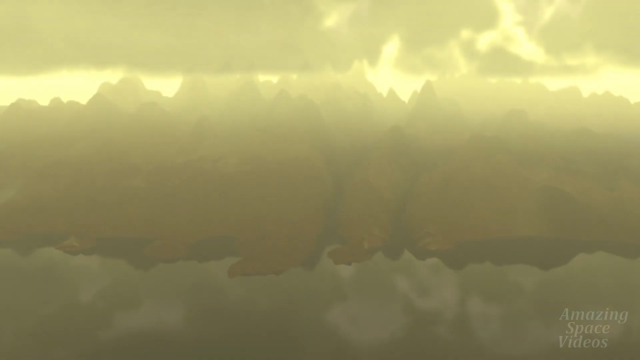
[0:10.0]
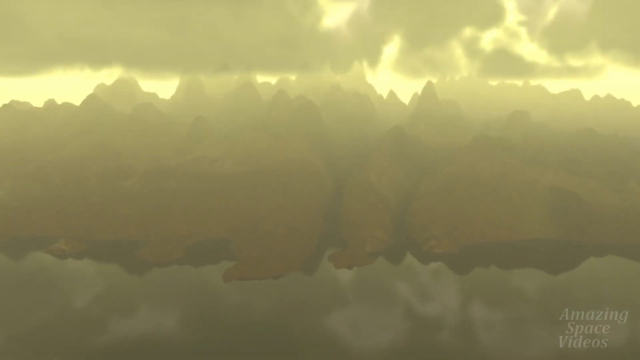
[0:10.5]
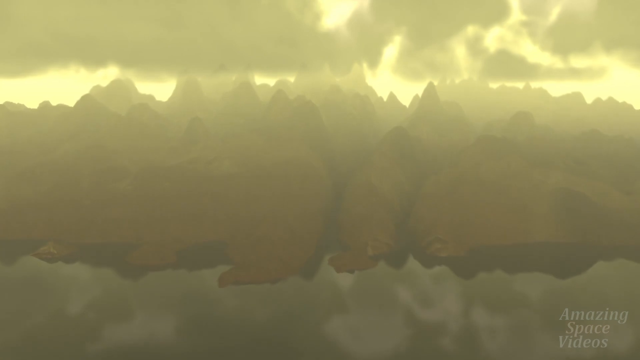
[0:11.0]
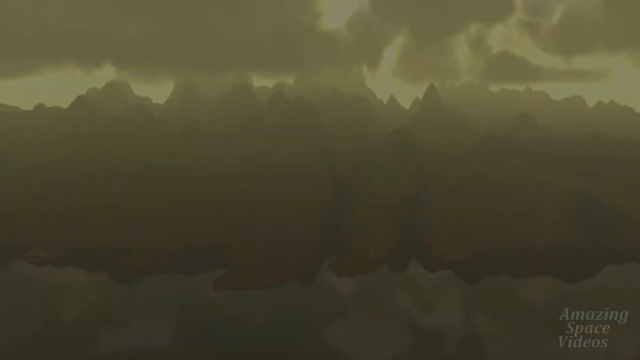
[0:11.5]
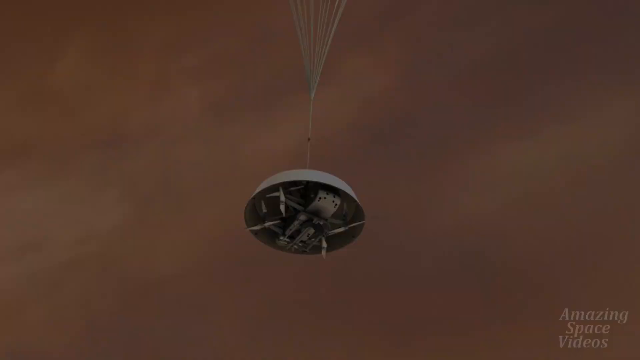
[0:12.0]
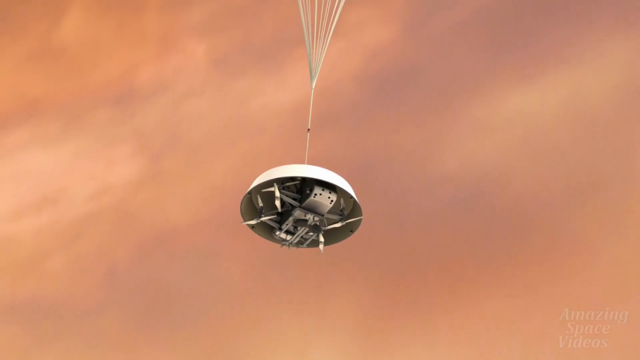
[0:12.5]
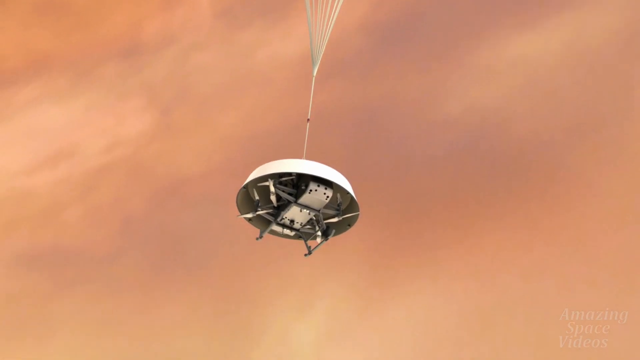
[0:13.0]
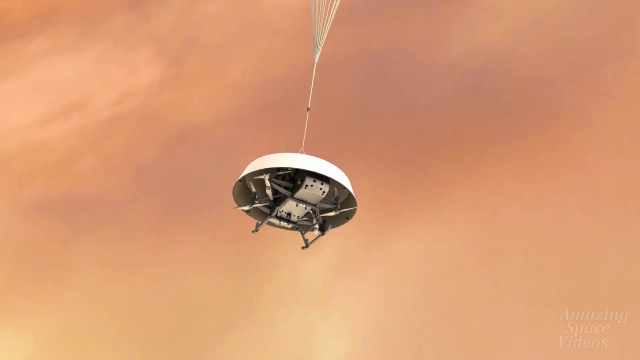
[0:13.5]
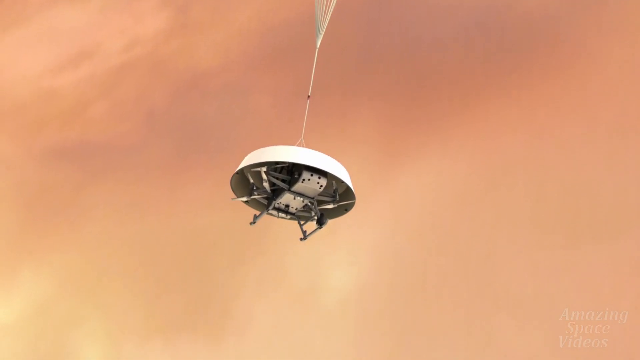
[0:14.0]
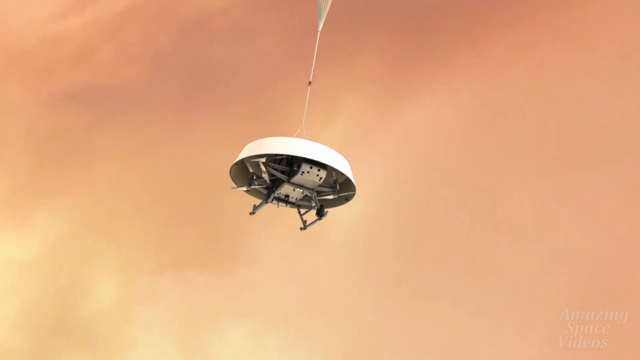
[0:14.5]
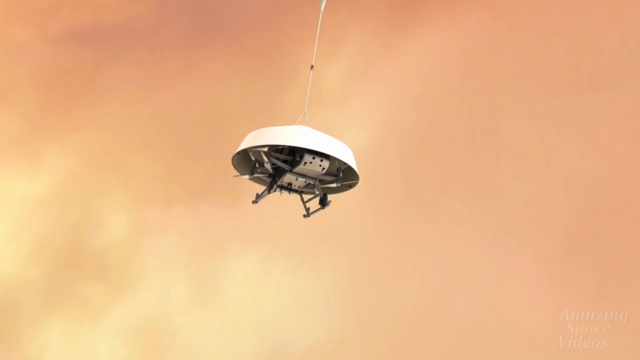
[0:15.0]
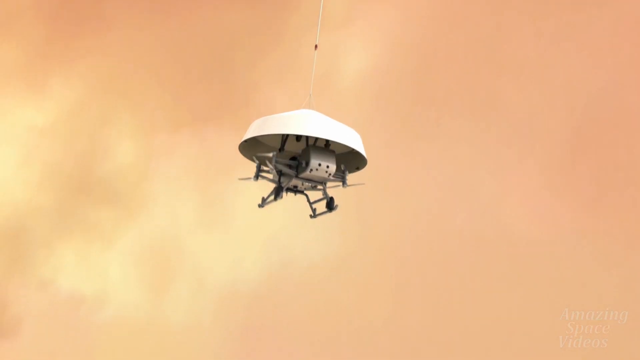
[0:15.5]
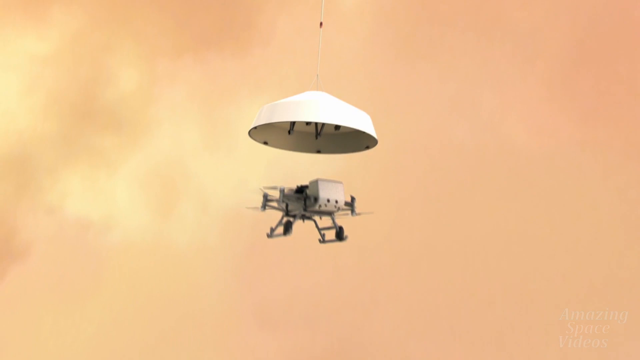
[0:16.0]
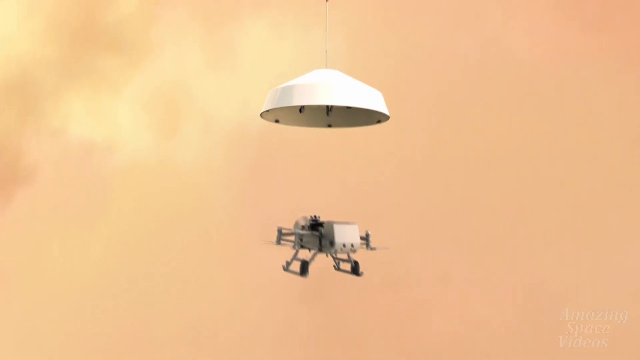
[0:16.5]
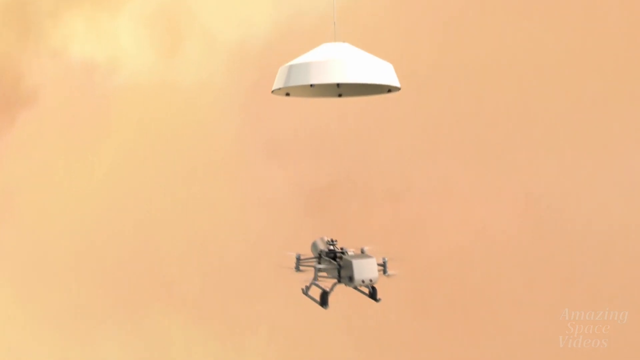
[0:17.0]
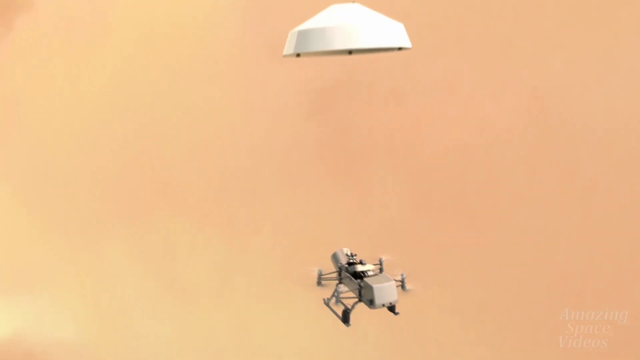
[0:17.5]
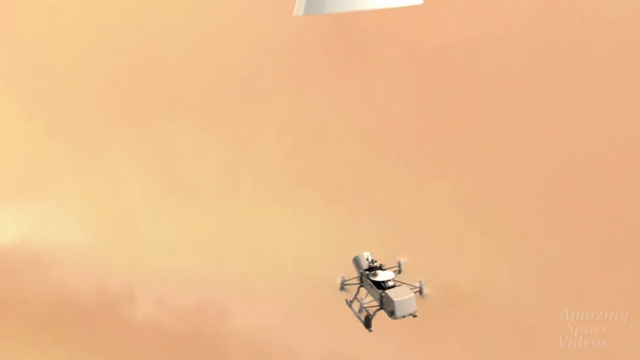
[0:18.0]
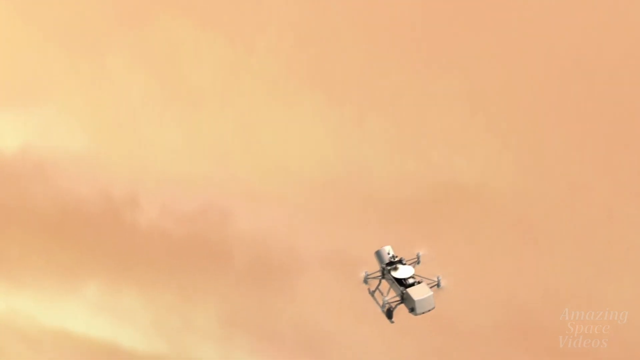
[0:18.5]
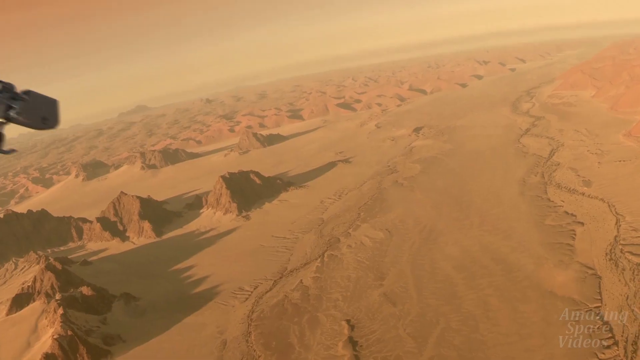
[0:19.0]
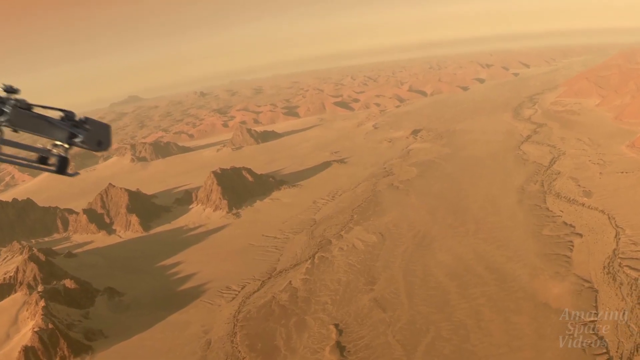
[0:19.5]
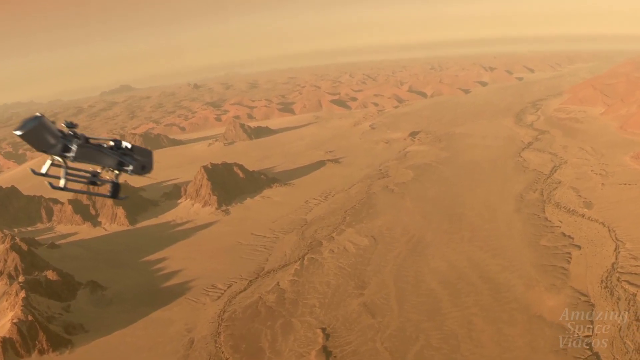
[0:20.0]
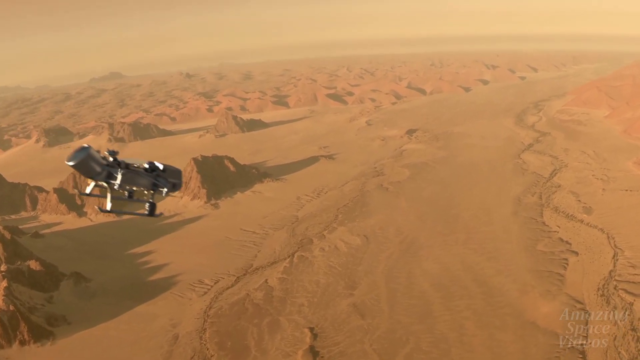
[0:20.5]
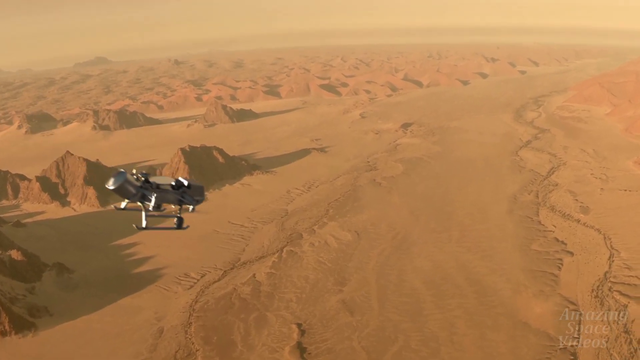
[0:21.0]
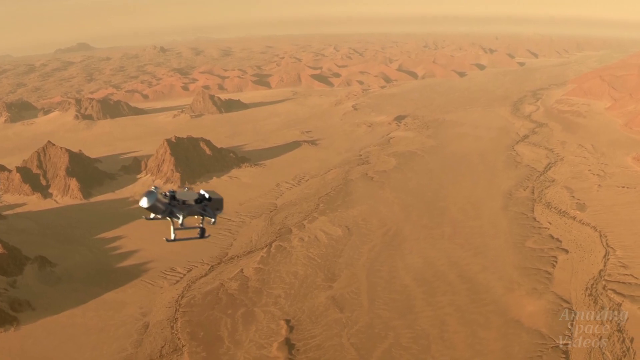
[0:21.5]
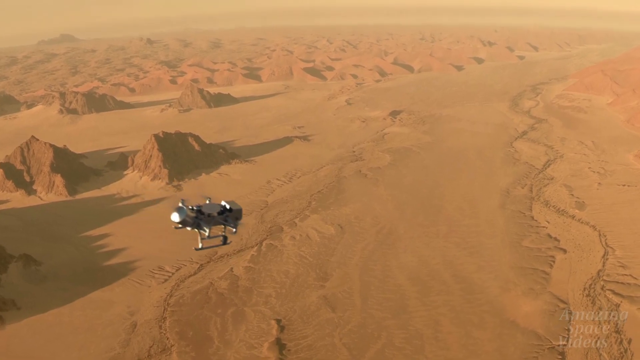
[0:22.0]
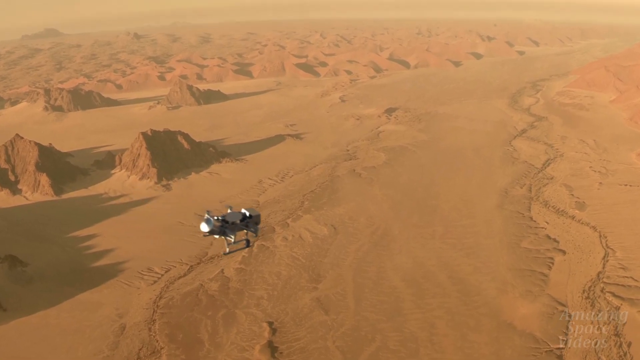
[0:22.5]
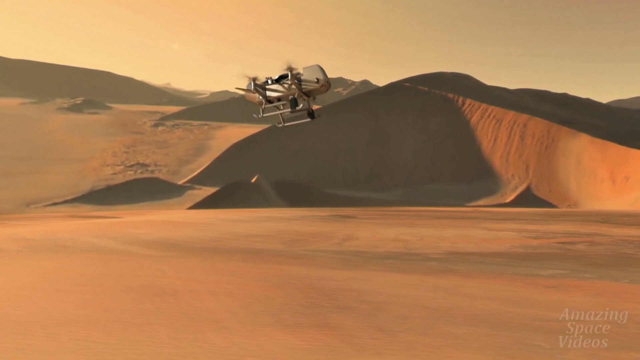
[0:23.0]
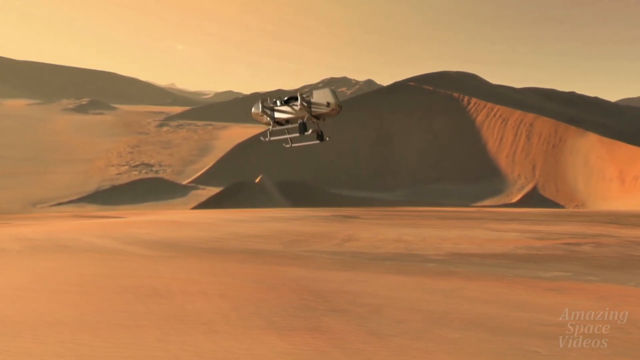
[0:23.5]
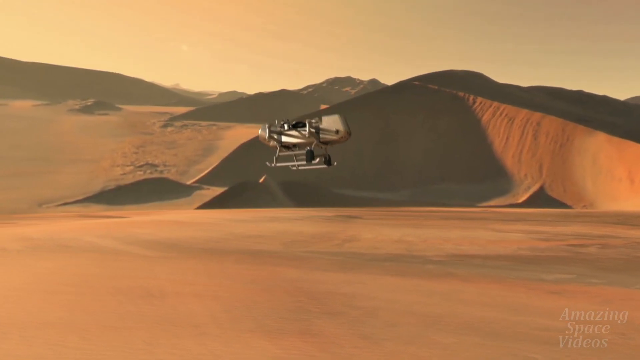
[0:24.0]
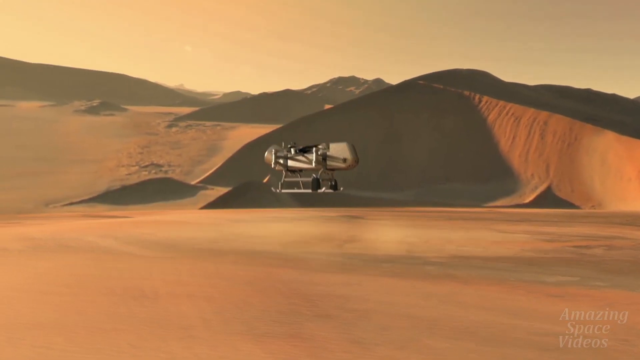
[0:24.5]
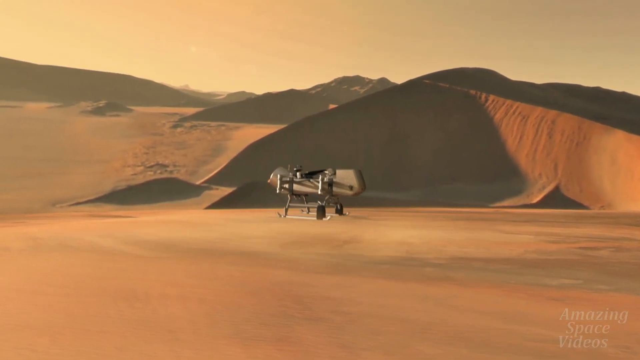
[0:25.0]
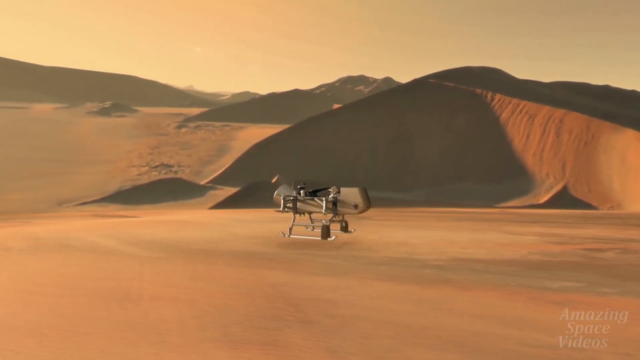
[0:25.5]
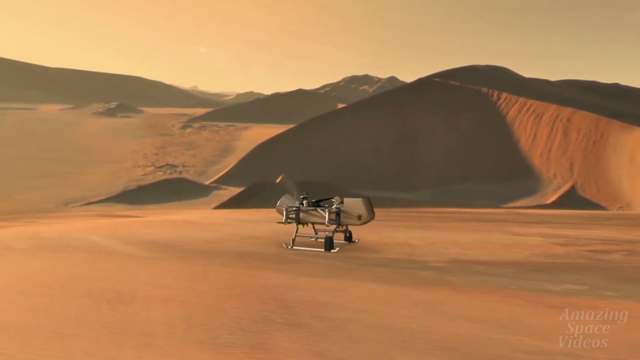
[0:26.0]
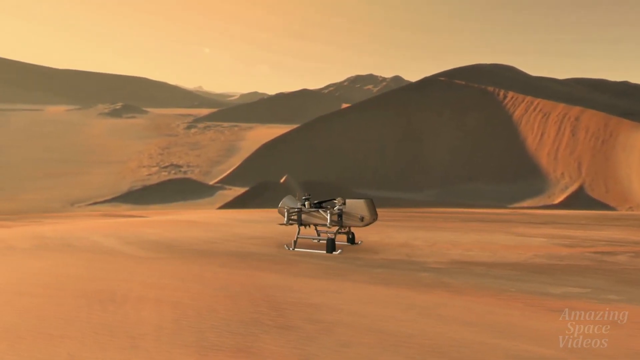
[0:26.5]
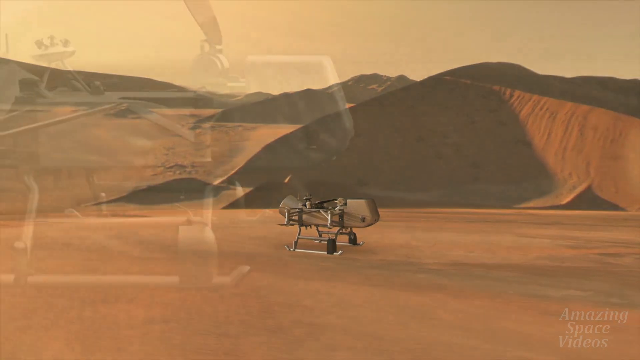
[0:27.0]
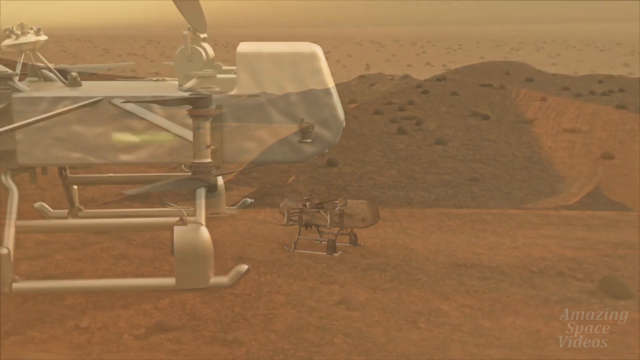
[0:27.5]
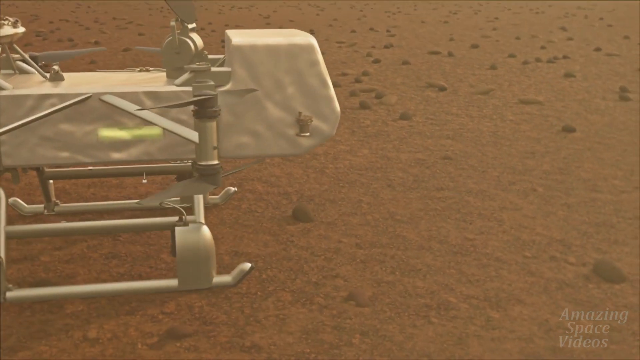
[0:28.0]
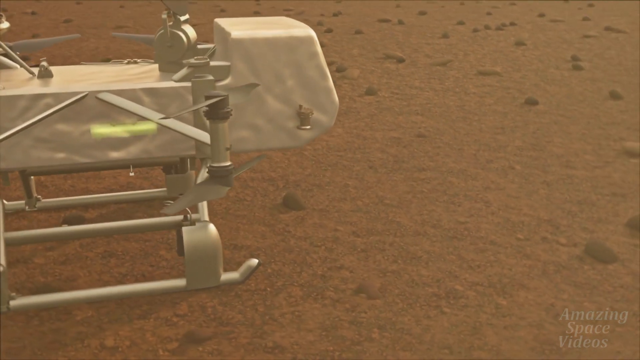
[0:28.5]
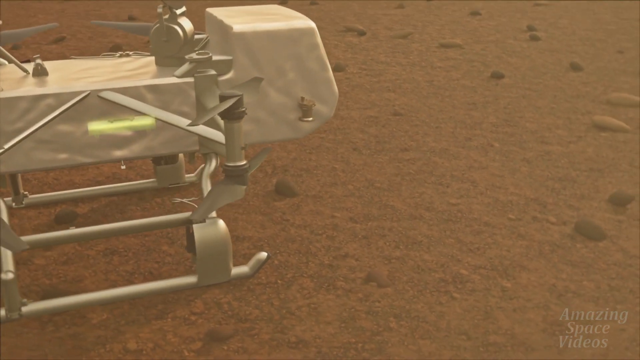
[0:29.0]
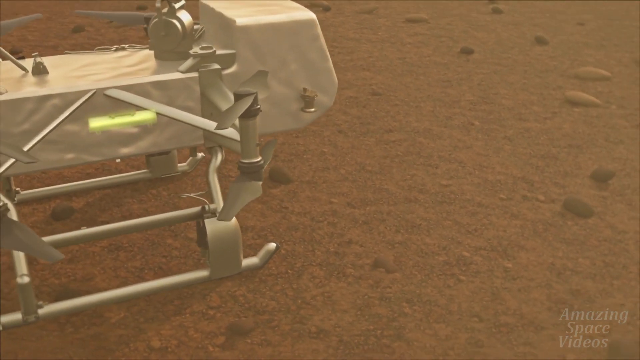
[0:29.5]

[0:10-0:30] The view slowly zooms in through various clouds in some kind of planet's atmosphere; the sky has a yellow tinge and the clouds are gray. The camera continues zooming in, revealing a 3D rendition of a large mountain range. At the base of the range there seems to be either a white ocean or ice. The screen fades to black, then cuts to a 3D model of a space probe slowly deploying from the sky. It is attached to a large white half-sphere-shaped parachute with various strings forming a cone; they come together into a larger string that attaches to a large upside-down white tub. Inside the tub is a large air drone, which starts to deploy: it lowers two railings at its base and extends four propellers, two on each side. It drops out of the conical dish and flies free from the parachute and dish. The rendering then shows the drone slowly flying over the mountain range seen earlier, with multiple tan-colored mountains in the distance and sandy brown deserts. Using its four propellers, the drone slowly lowers itself onto its two railings on one of these deserts, and brown dust flies from it. The view closes in on the drone's main body, and the camera slowly pans clockwise around it.